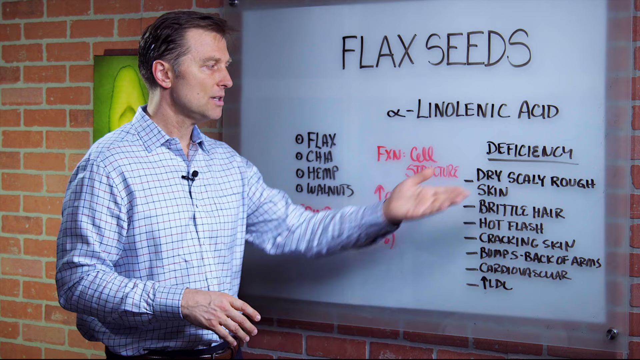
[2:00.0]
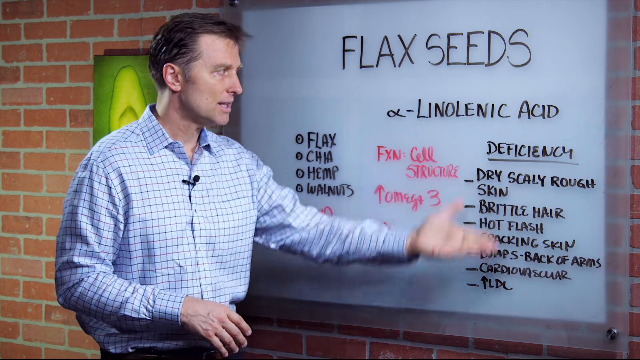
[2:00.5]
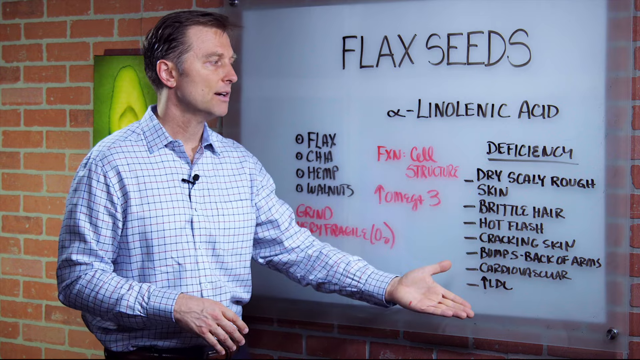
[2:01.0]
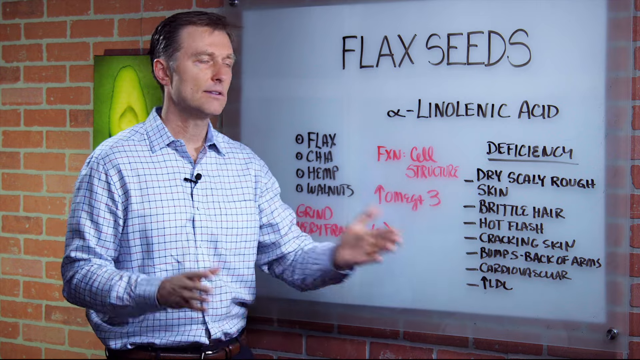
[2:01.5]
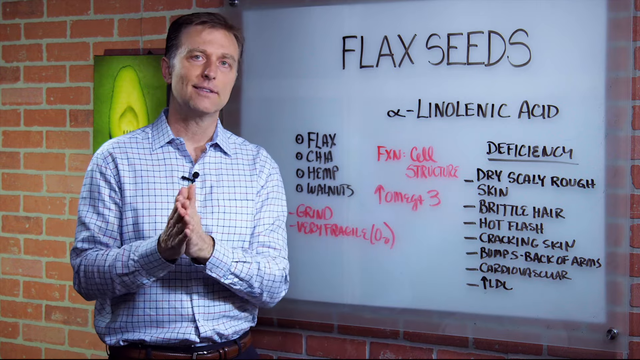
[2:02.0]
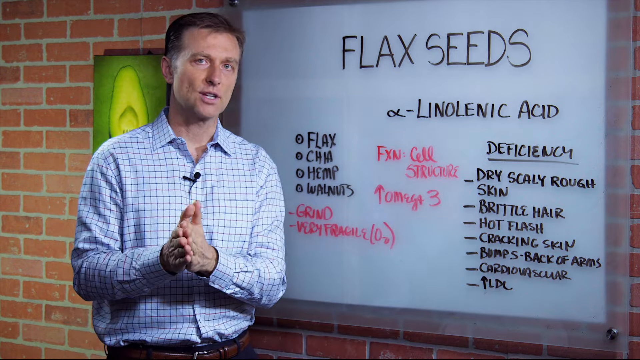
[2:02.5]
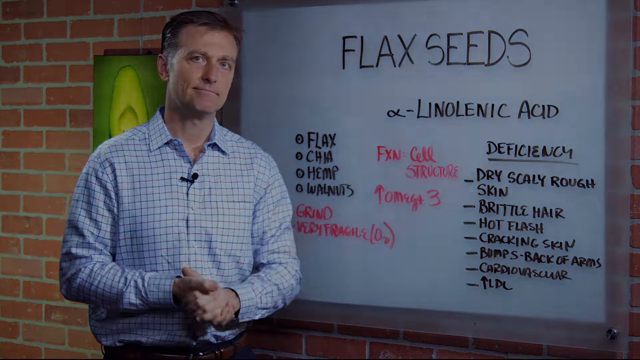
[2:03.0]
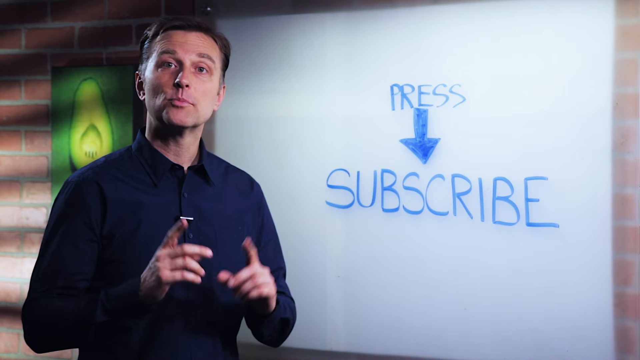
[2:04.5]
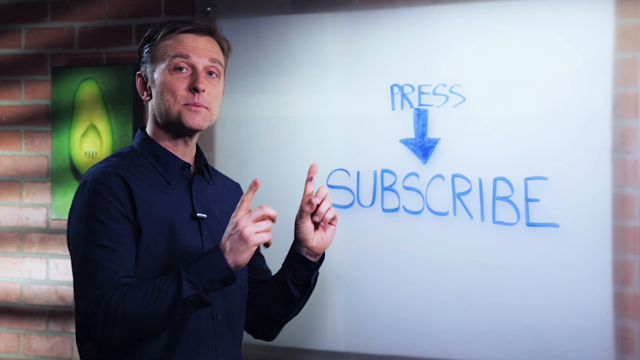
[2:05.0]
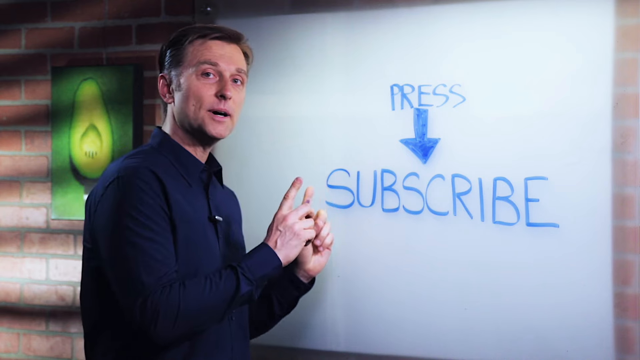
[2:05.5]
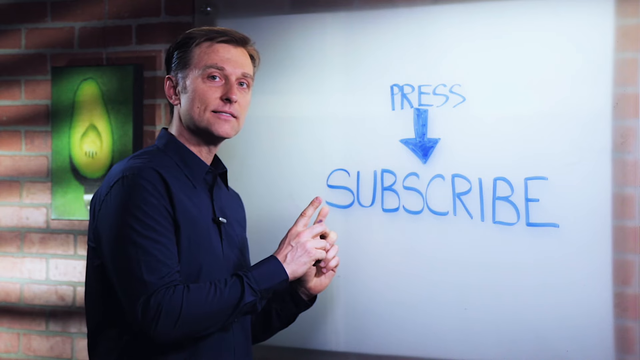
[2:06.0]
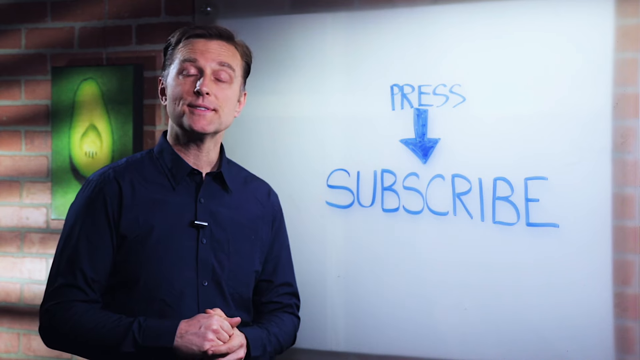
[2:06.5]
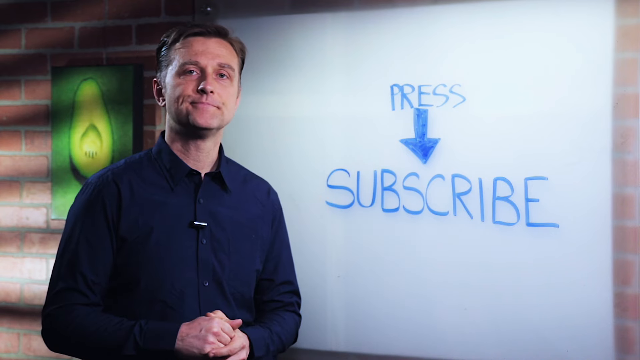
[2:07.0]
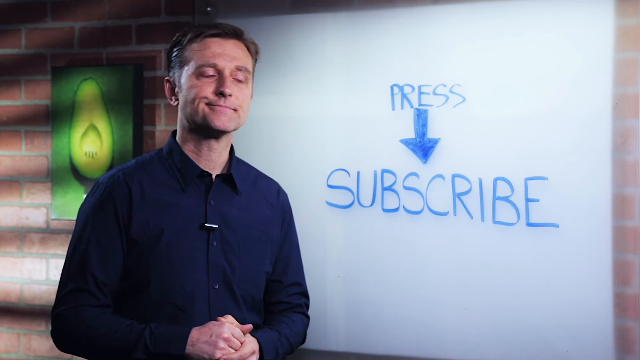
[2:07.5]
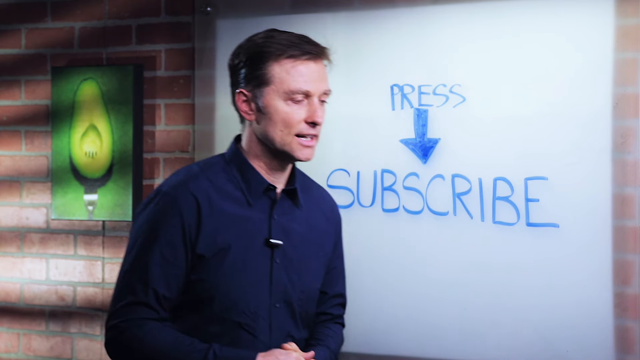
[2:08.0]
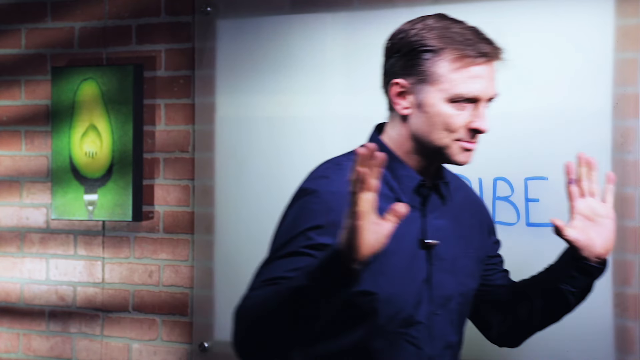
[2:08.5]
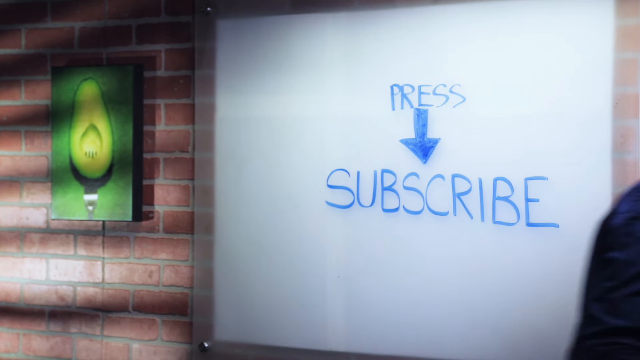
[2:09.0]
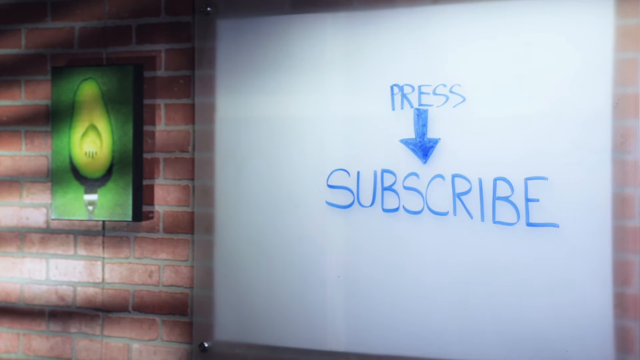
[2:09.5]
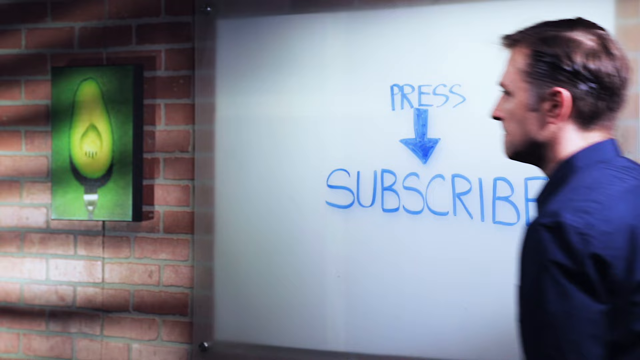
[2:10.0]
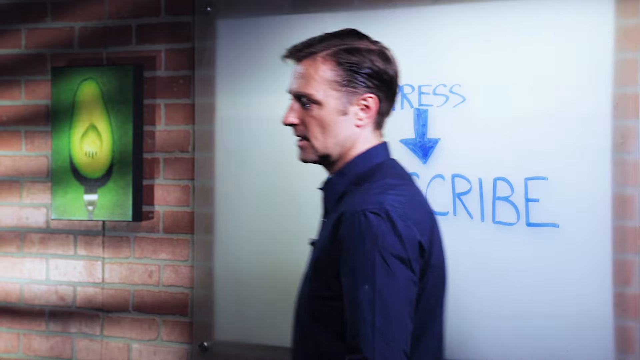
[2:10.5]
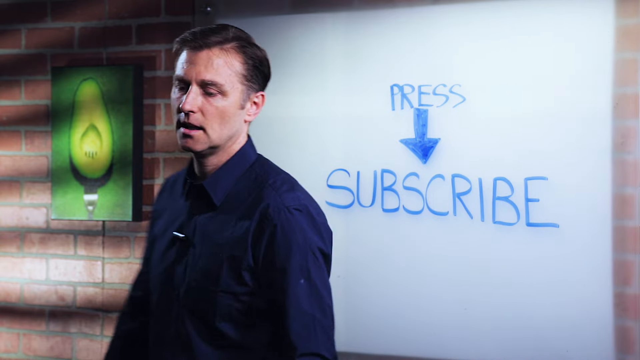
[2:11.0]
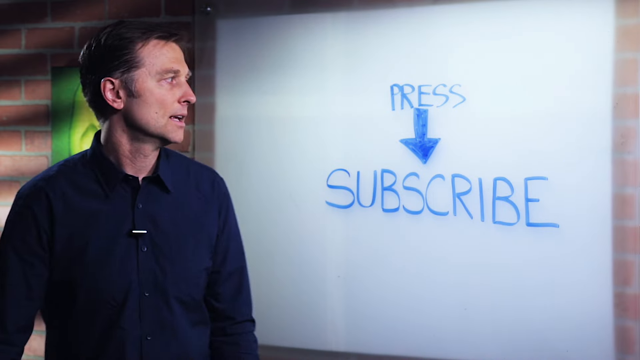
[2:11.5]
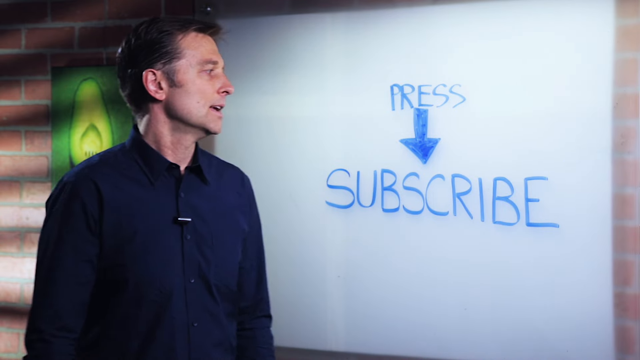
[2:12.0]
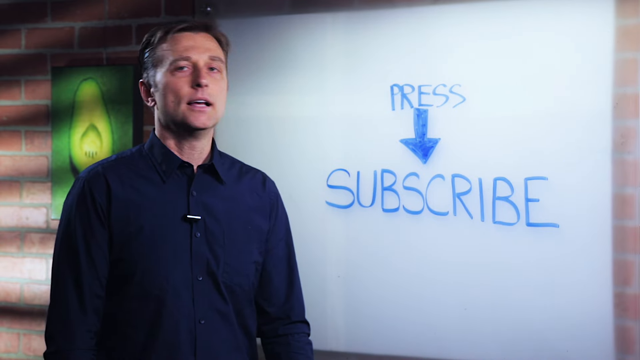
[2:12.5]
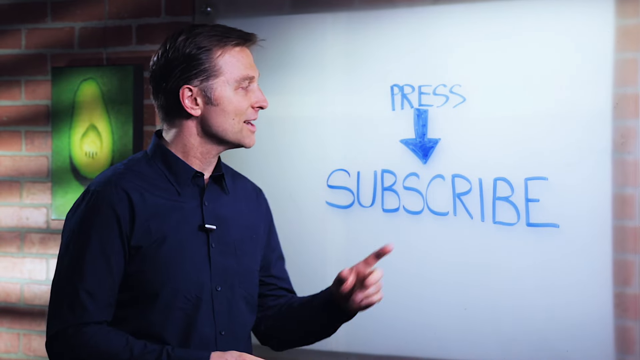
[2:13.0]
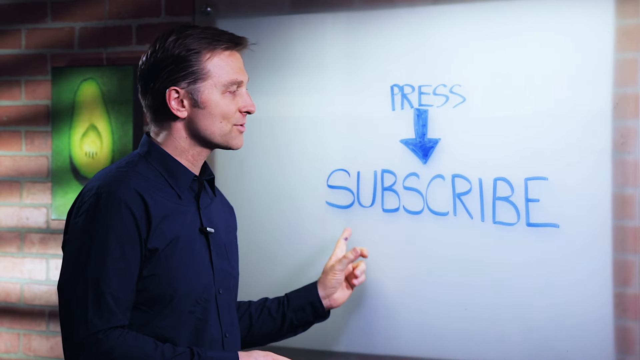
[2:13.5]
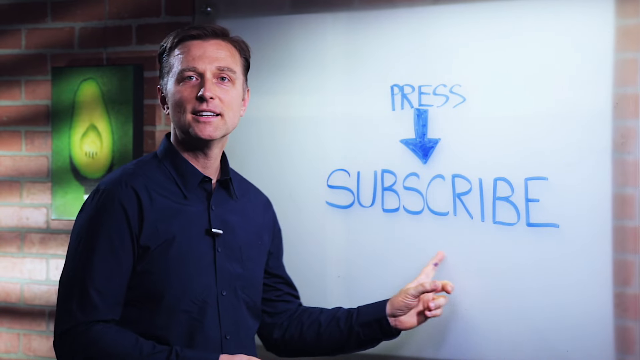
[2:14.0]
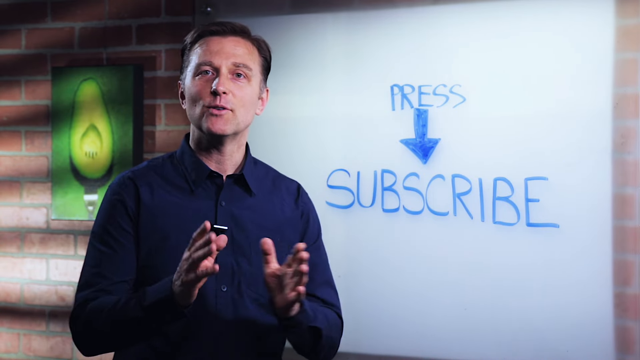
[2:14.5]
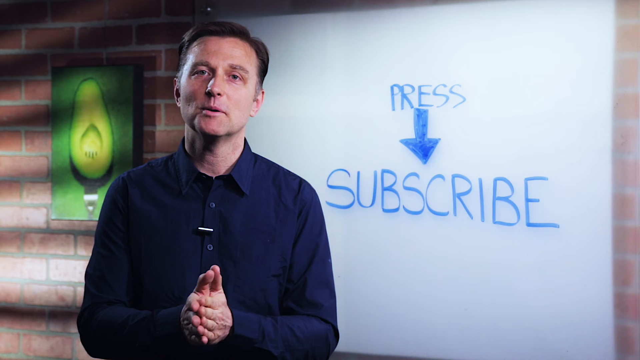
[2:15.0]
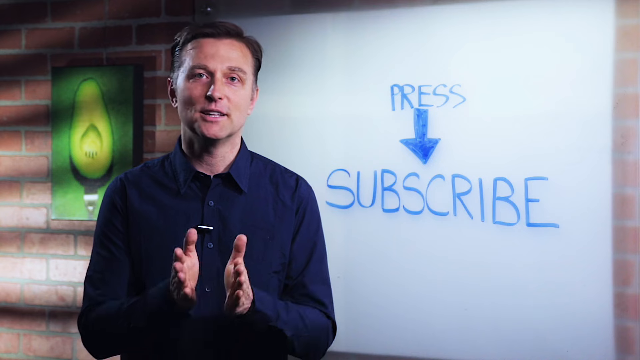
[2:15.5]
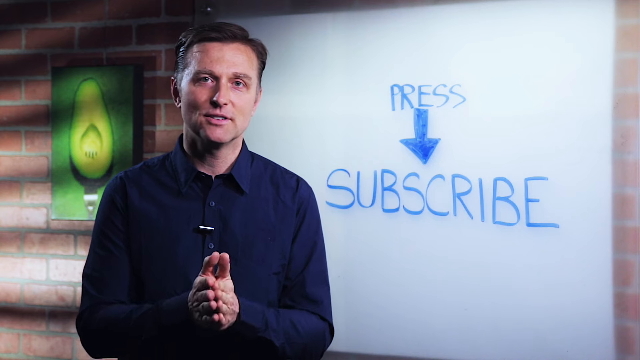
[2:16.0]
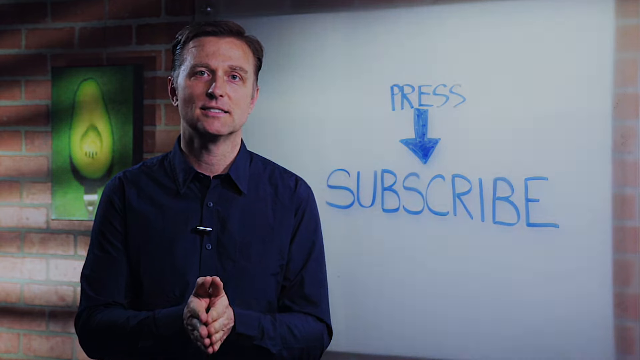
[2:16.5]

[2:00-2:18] A man presents a lesson on flaxseeds. The video cuts to a board with "press" and "subscribe" written in blue and an arrow pointing from press to subscribe. It then cuts back to the flaxseed lesson, with the word in big letters, smaller black letters underneath and some pink letters, and then cuts again to the press, arrow, subscribe board. The man leaves for a second, comes back to the board and points to the words press, arrow, subscribe; as he leaves, he has his hands up in the air. Behind him is a red brick wall with a picture of a green seed cut in half, with a small circular cutout. The video shows a profile picture of the presenter, in which he wears a blue button-down shirt. In the flaxseed lesson he wears a blue and white button-down shirt, but in the subscribe segment he wears a solid blackish shirt. His microphone seems to be more silvery than black.